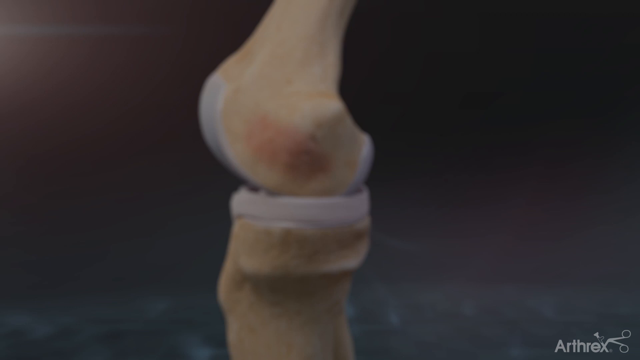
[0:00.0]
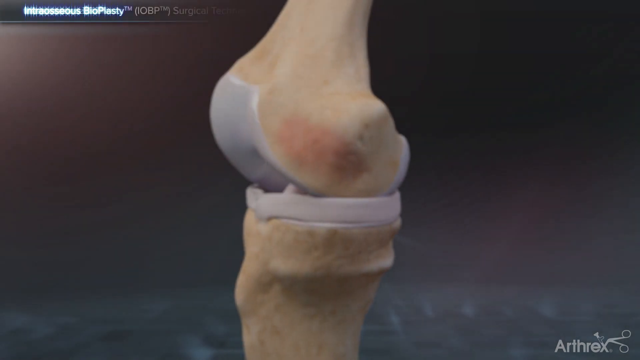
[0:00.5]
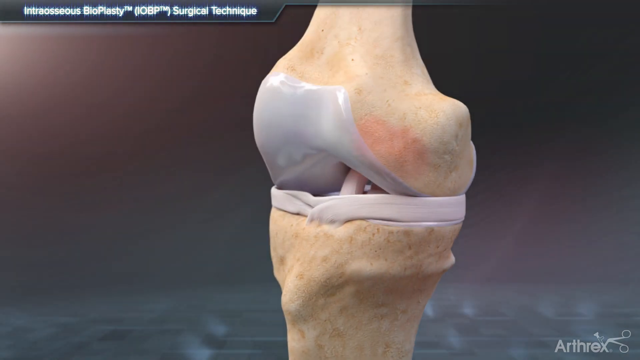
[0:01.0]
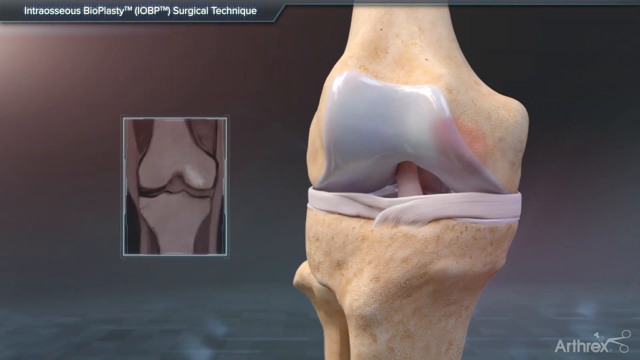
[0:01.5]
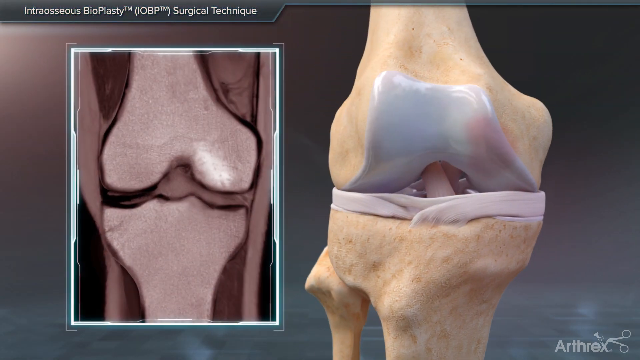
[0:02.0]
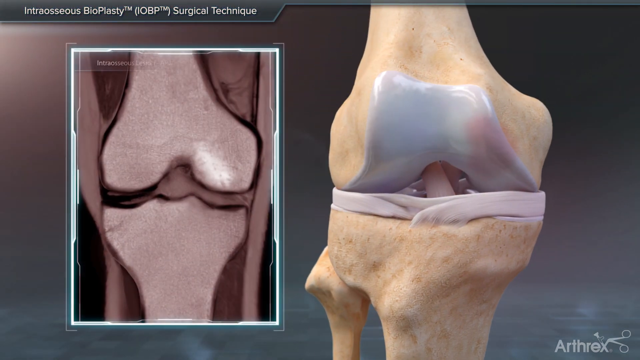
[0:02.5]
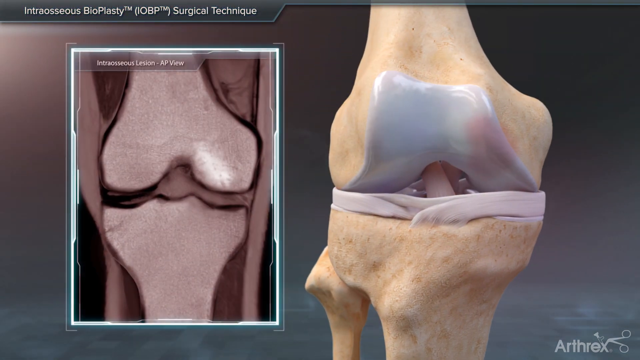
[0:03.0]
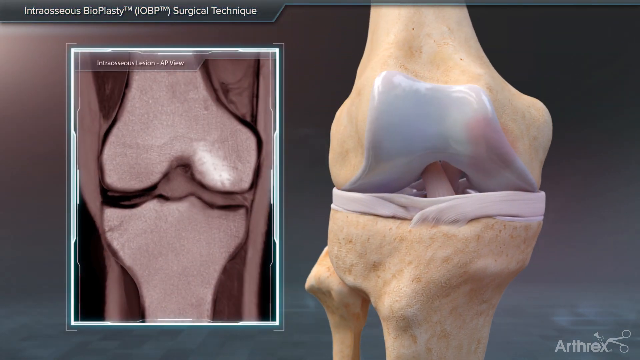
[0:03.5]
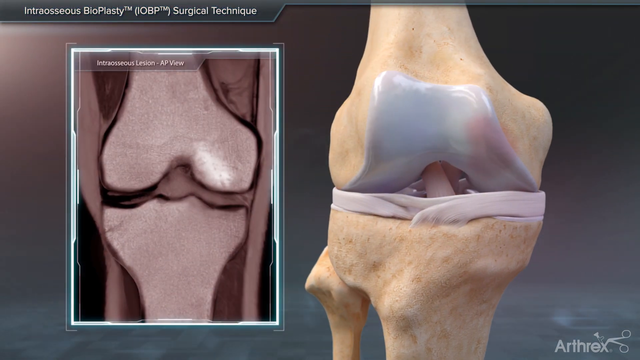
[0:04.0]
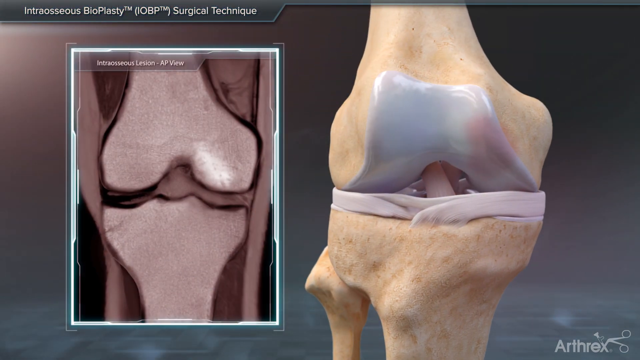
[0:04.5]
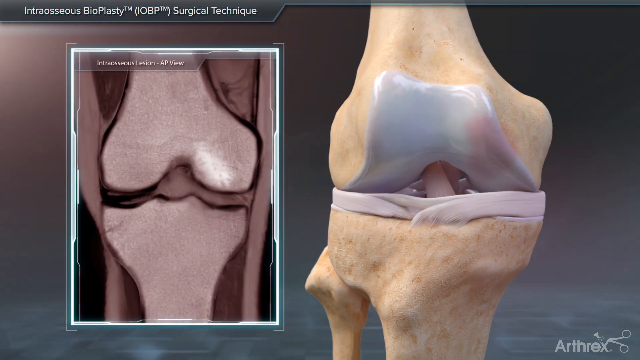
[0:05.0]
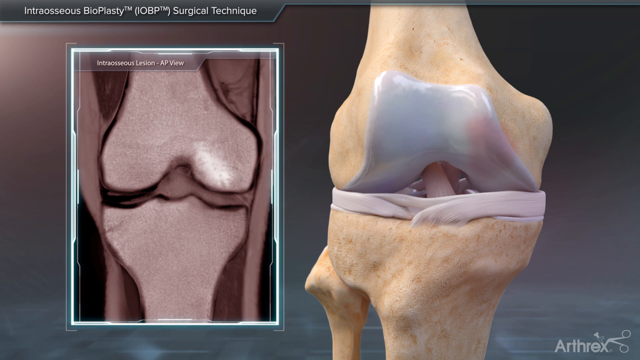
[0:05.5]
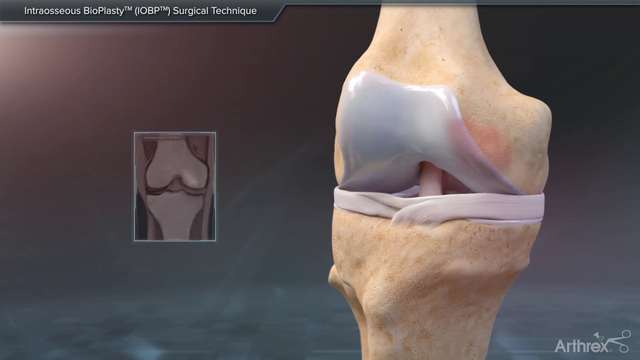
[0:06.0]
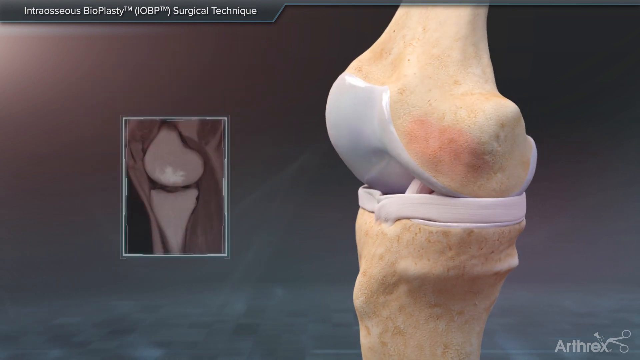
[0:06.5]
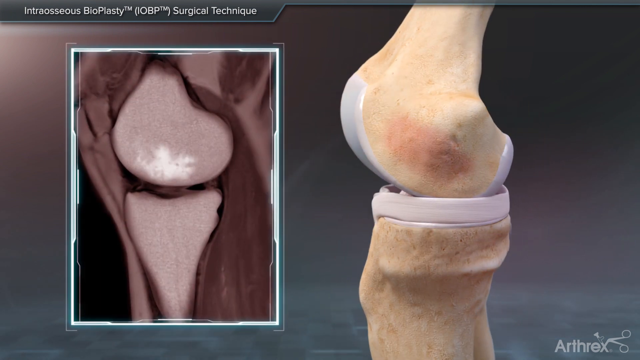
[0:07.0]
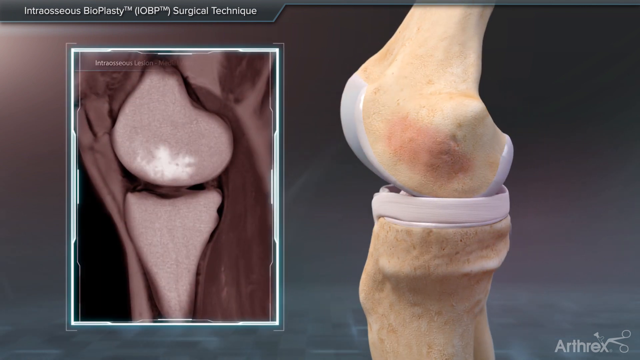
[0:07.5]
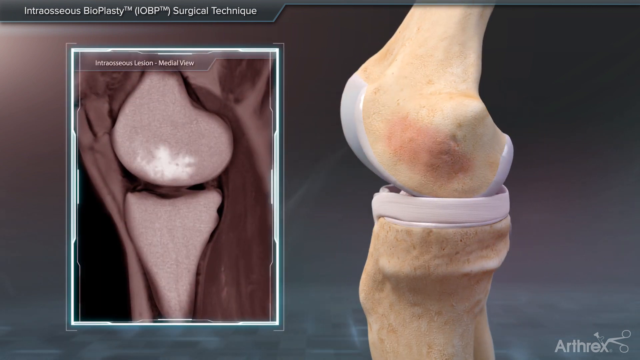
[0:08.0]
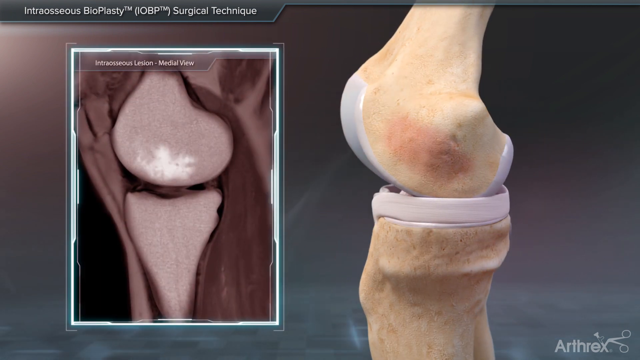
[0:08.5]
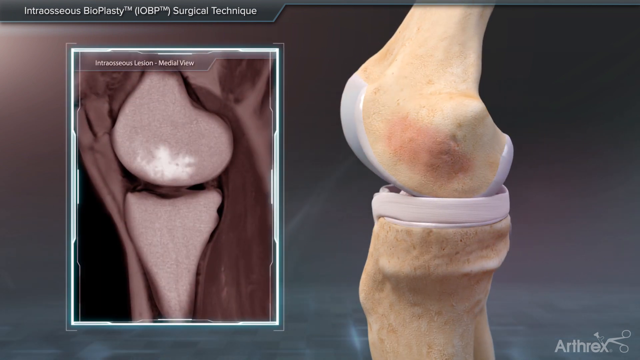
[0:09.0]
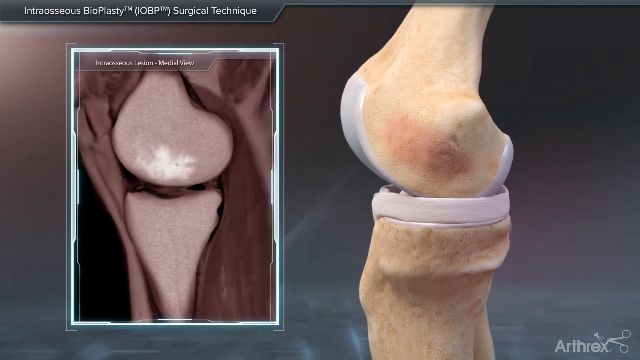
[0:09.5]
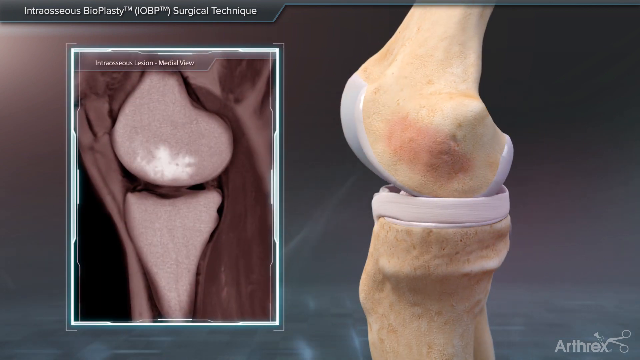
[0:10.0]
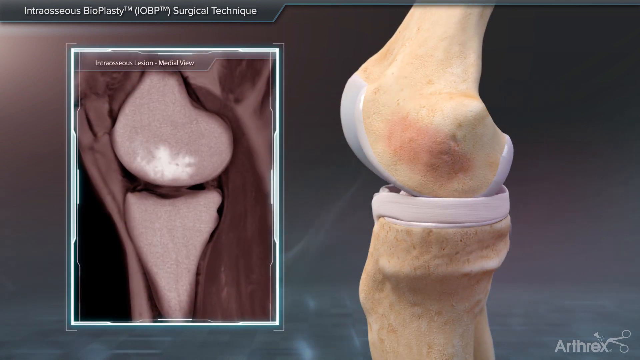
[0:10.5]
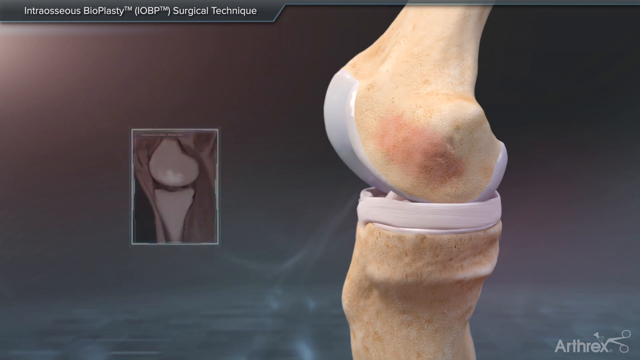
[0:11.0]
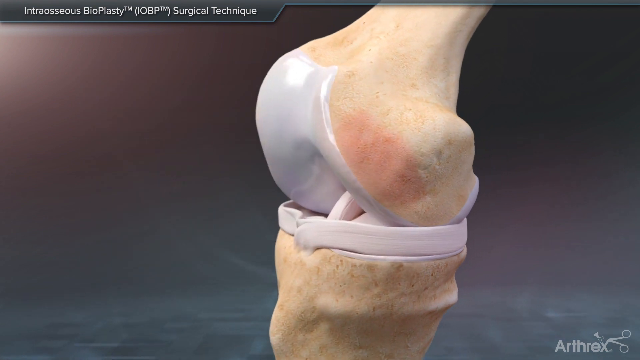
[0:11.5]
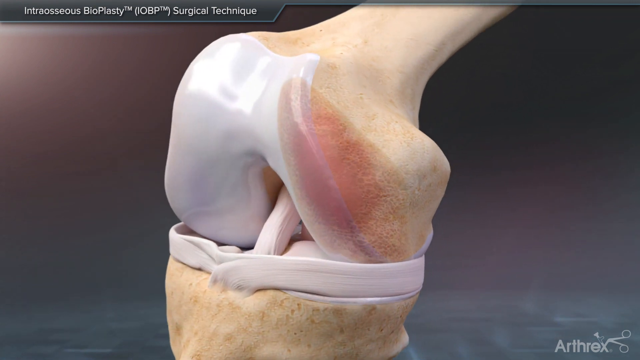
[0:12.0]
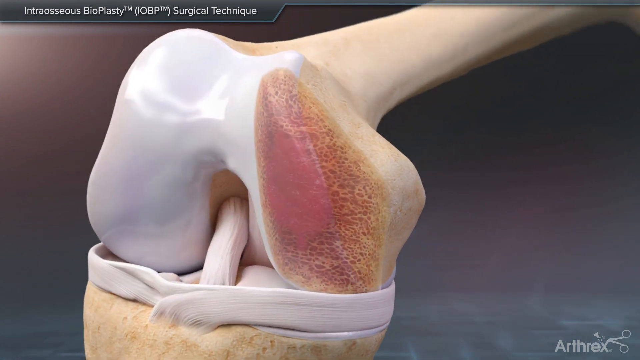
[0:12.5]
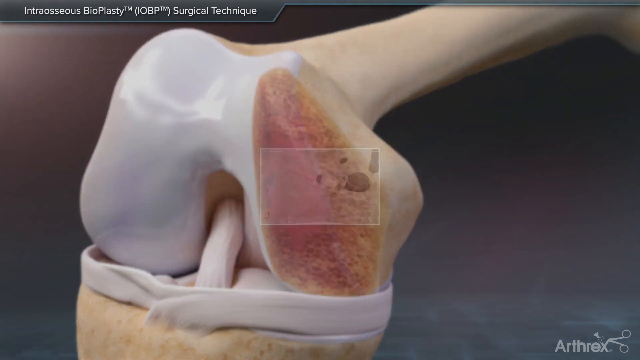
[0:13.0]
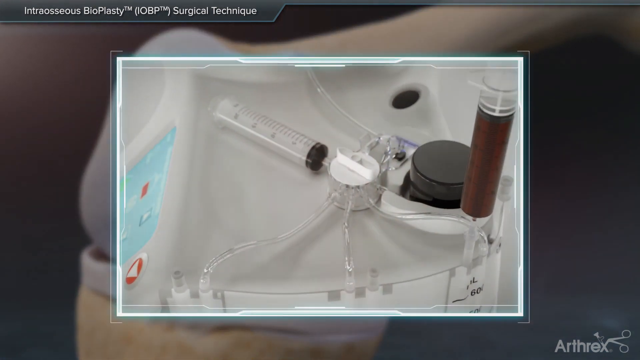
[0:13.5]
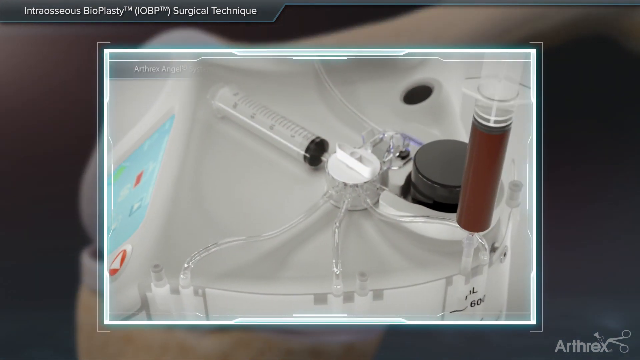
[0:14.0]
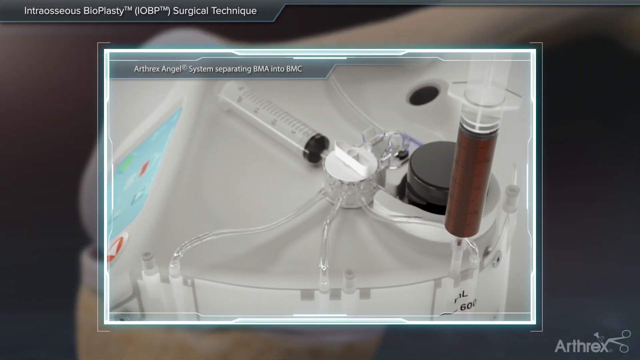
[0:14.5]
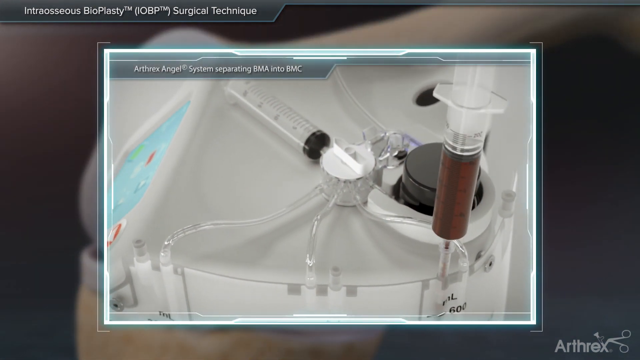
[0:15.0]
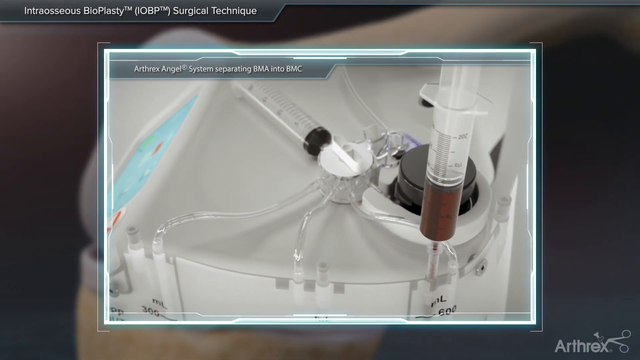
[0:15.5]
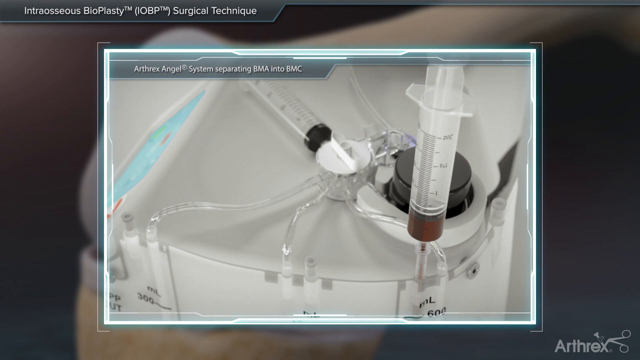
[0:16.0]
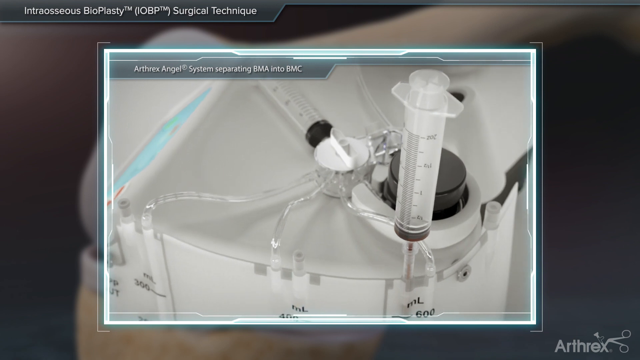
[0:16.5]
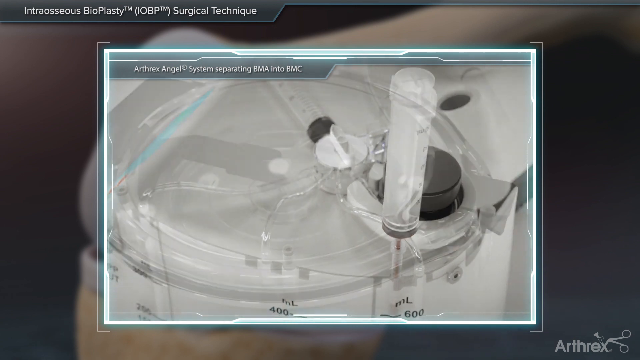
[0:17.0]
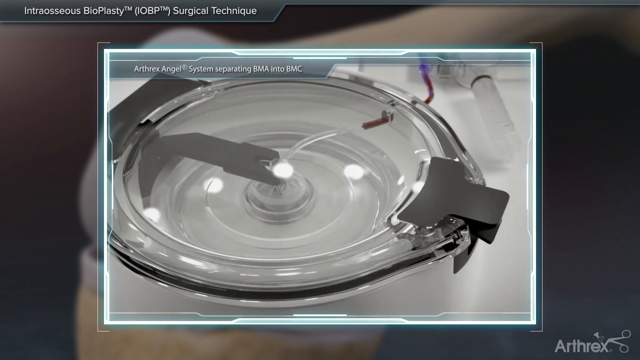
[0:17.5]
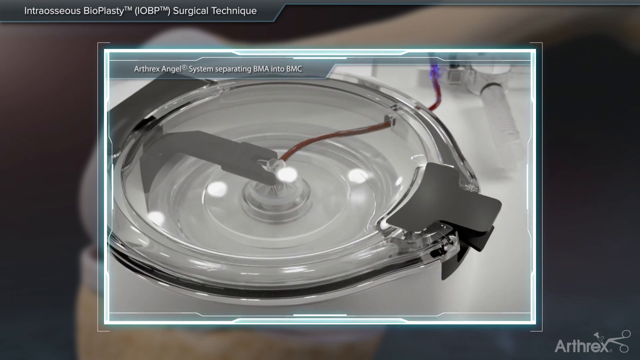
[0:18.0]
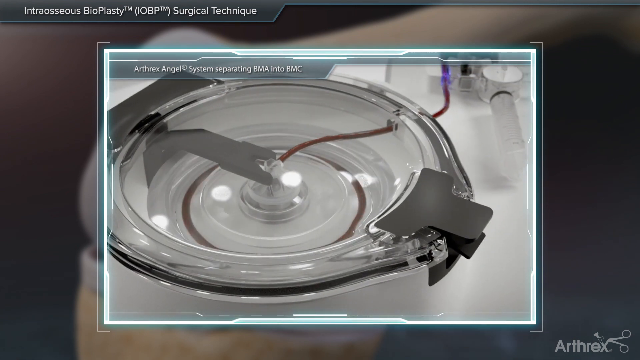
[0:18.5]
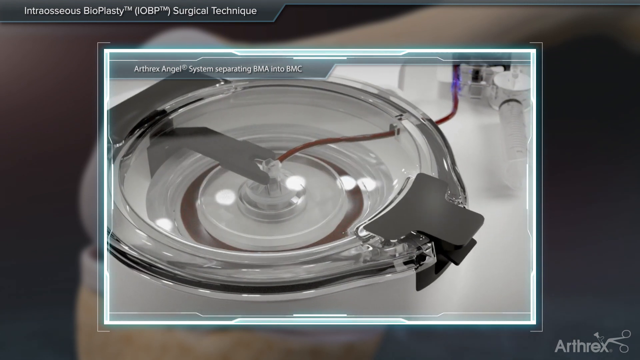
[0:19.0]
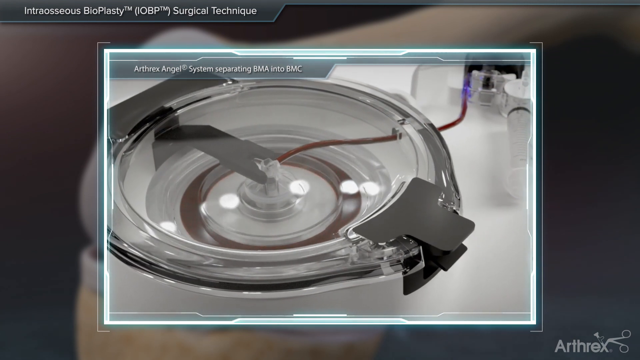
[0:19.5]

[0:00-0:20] A 3D model of a leg joint, apparently, appears on the right-hand side of the screen, showing the femur, or thigh bone, and a portion of the lower leg. The model rotates from left to right, revealing the ligament connecting the joints. The patella, or kneecap, is not shown in front, but some sort of tissue and muscle connects the leg bones. On the right-hand side there is what appears to be an inset of an X-ray, seemingly showing what this would look like in a real person for comparison with the model. The model then rotates from right to left to a side-angle view of the leg bone and the connection between the bones, with the X-ray inset now on the left-hand side. Next the knee joint is bent, still without the kneecap in place, showing the end of the bone and the ligament connecting the bones. A rectangular highlight marks an area of the bone, apparently where the damage is. An inset appears showing some sort of large white surgical device: a white cylinder in the middle, a black cylinder to the right of it, and offshoots from the central white cylinder. Tubing connects to other tubes or pathways on the outer edge of the device. A syringe is inserted into the round white cylinder, and on the right-hand side a cylinder with what appears to be blood is depressed. Tubing carrying the red liquid, presumably blood, leads to another surgical device, which spins around; it could possibly be a plasma separator.